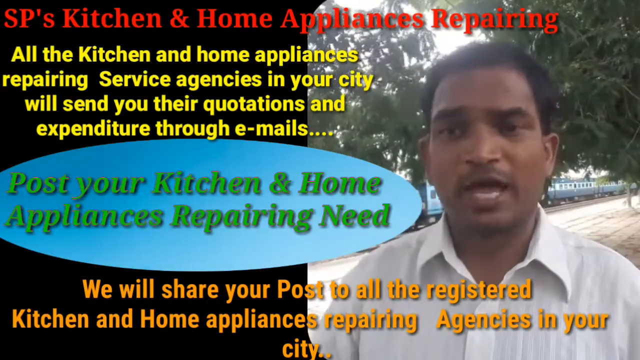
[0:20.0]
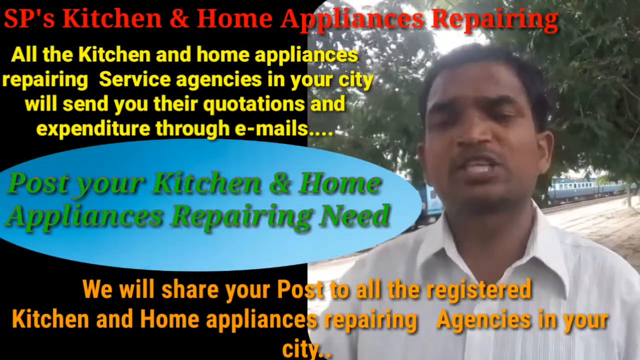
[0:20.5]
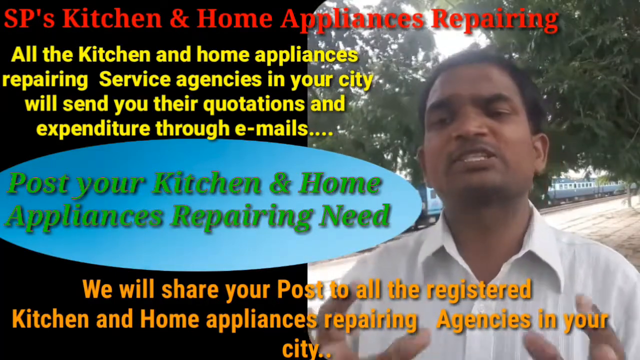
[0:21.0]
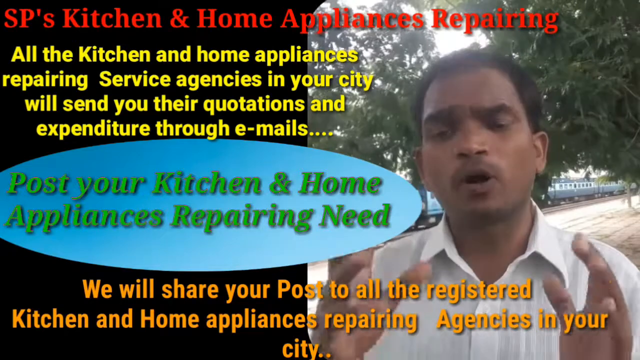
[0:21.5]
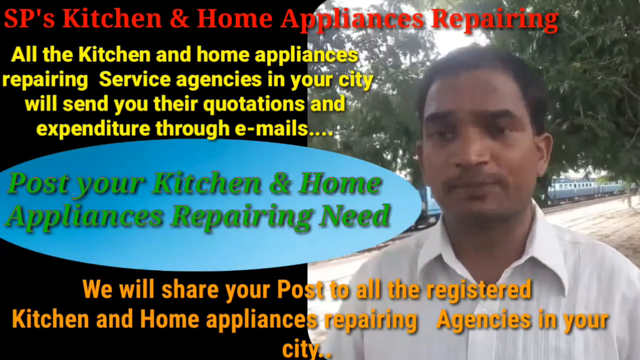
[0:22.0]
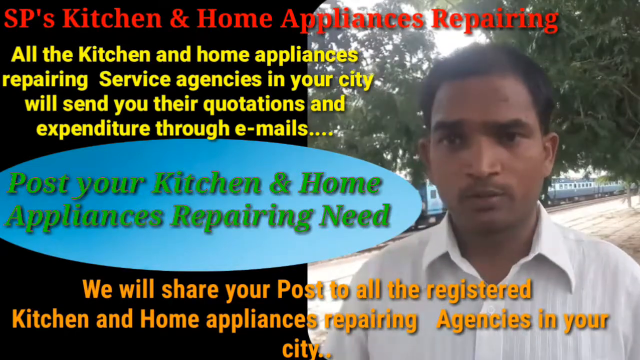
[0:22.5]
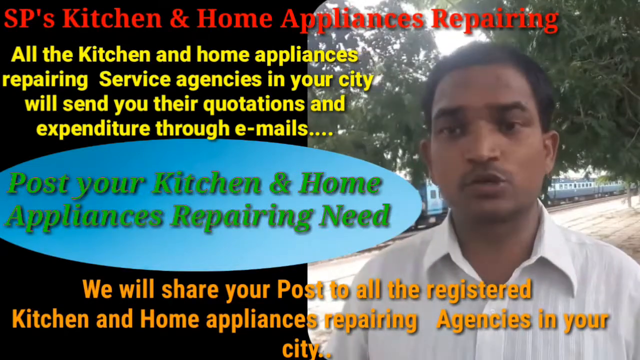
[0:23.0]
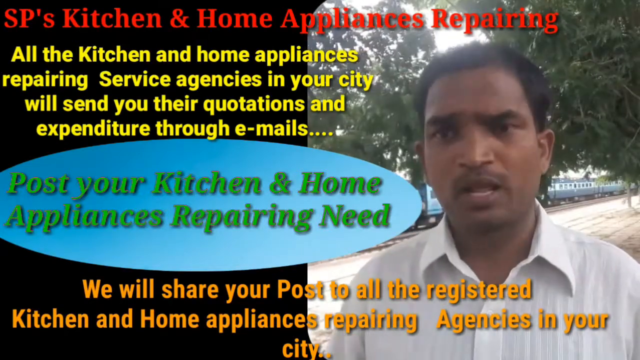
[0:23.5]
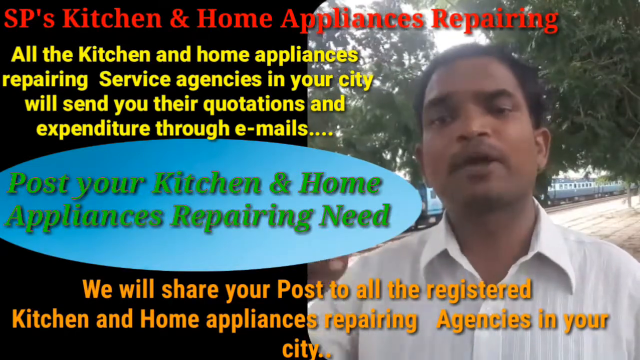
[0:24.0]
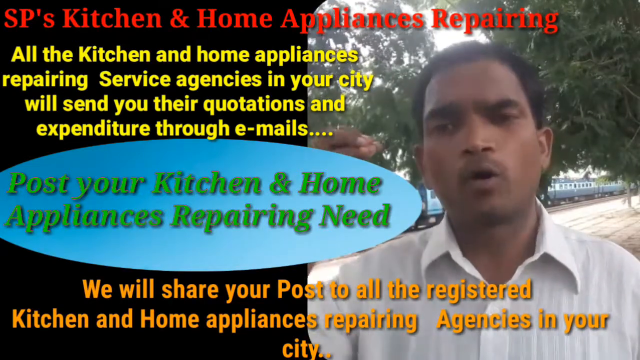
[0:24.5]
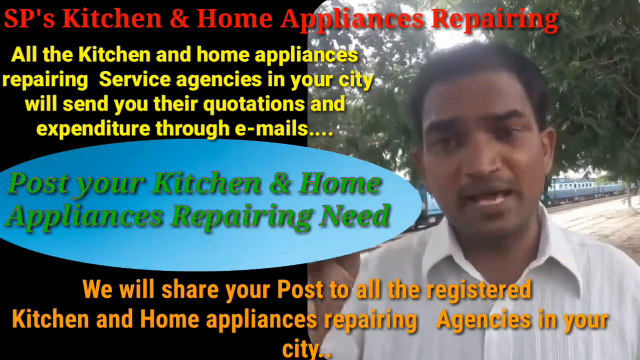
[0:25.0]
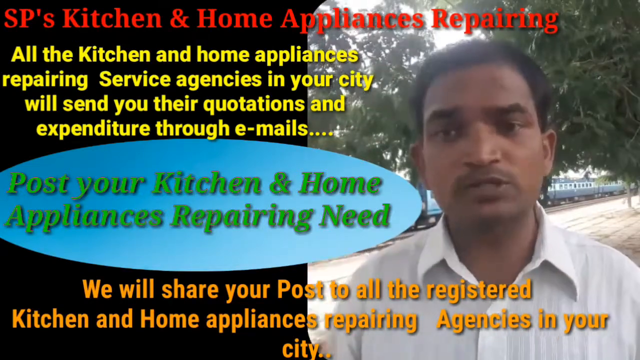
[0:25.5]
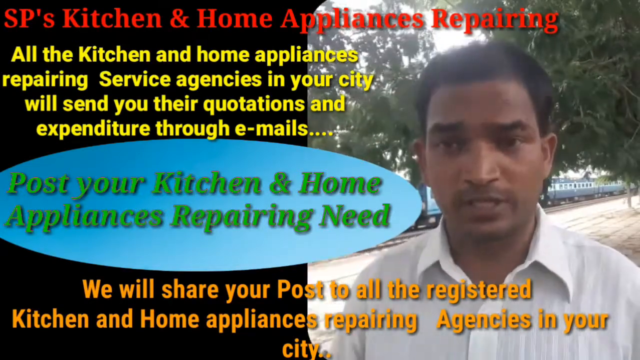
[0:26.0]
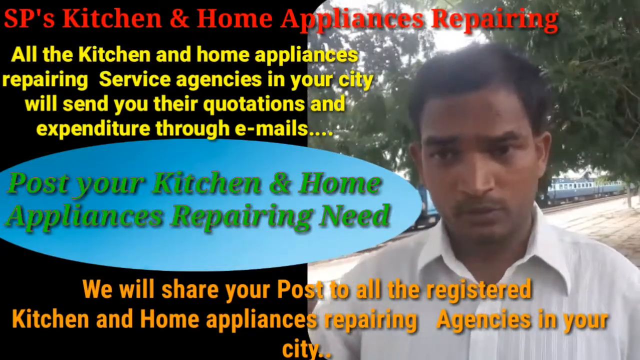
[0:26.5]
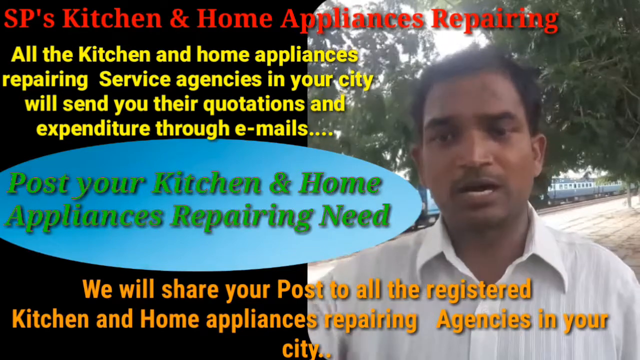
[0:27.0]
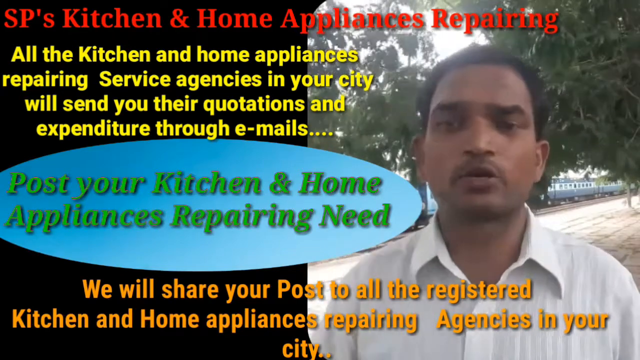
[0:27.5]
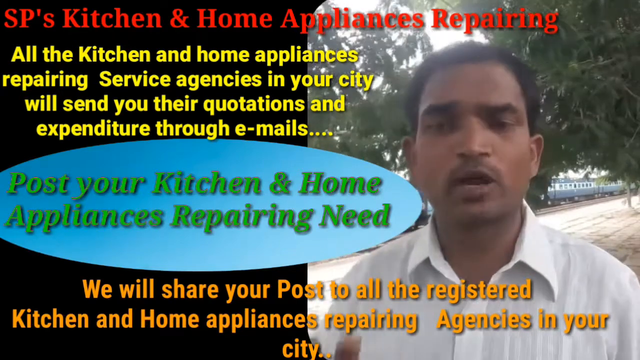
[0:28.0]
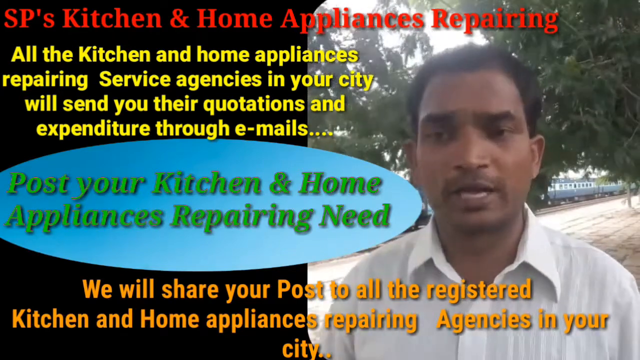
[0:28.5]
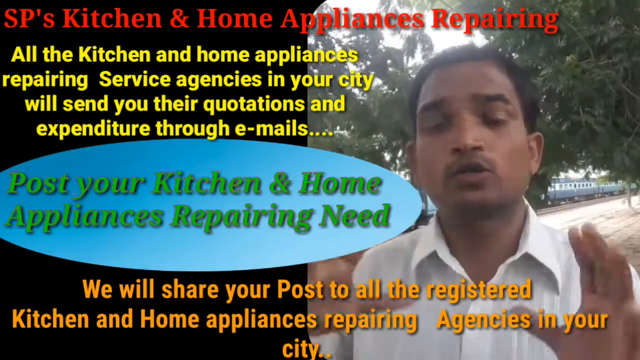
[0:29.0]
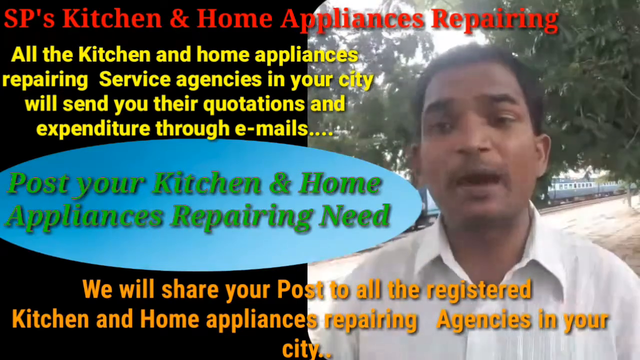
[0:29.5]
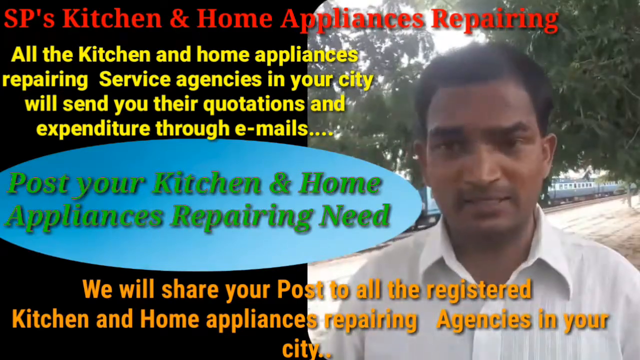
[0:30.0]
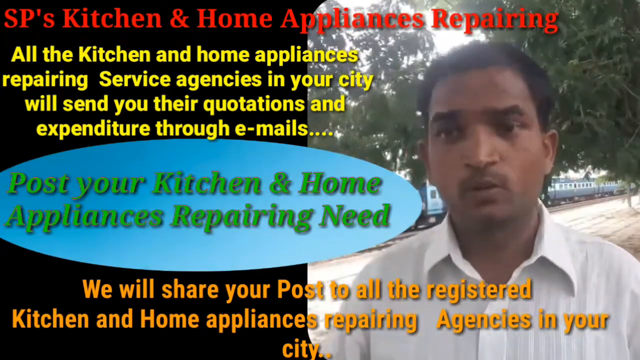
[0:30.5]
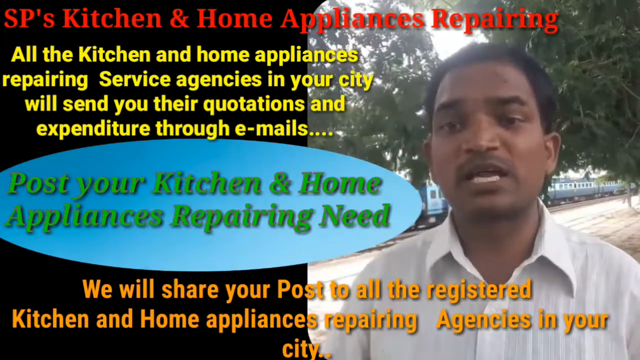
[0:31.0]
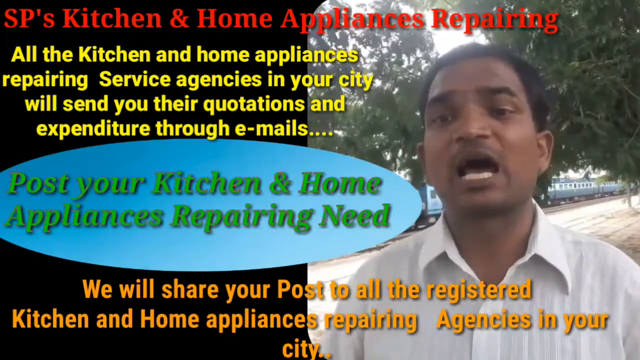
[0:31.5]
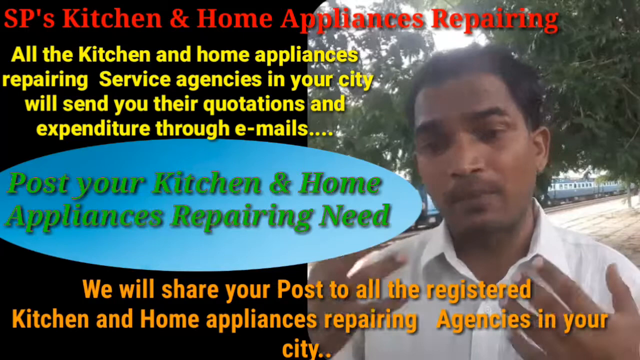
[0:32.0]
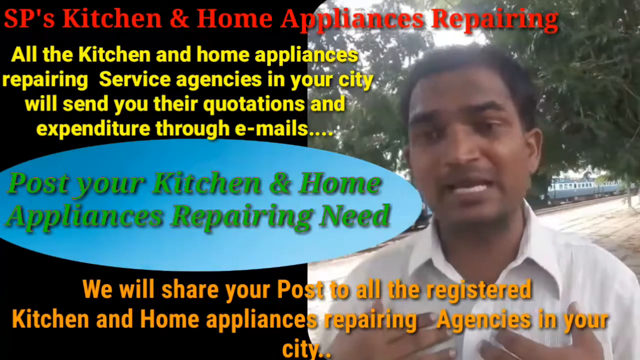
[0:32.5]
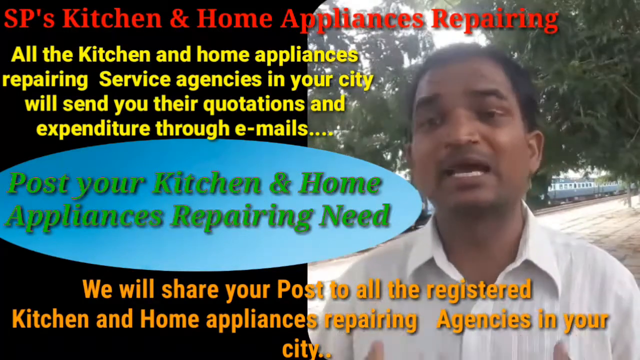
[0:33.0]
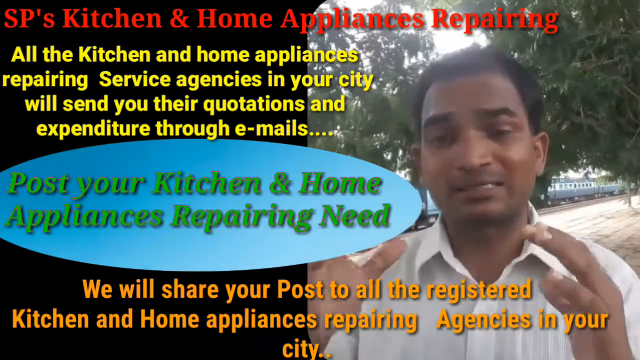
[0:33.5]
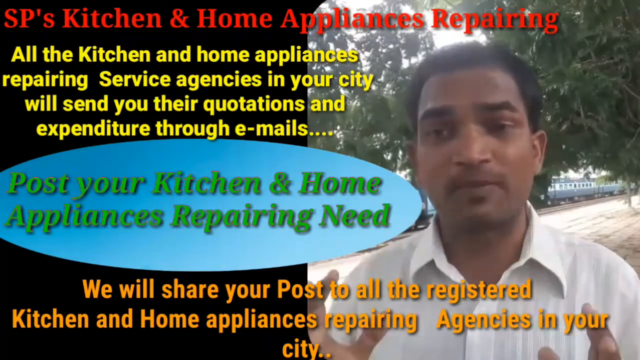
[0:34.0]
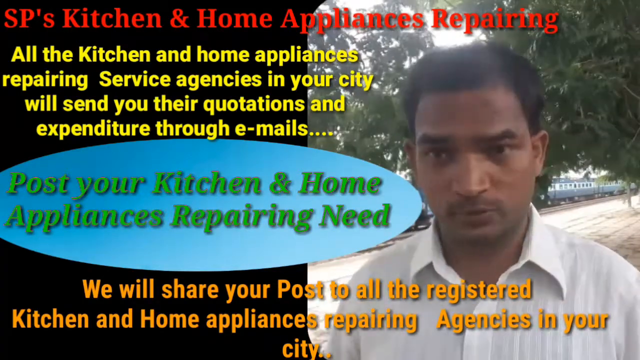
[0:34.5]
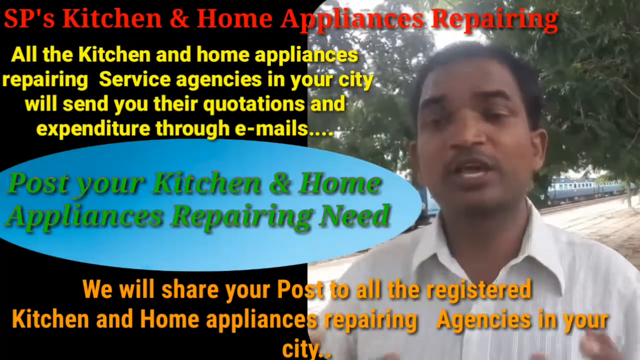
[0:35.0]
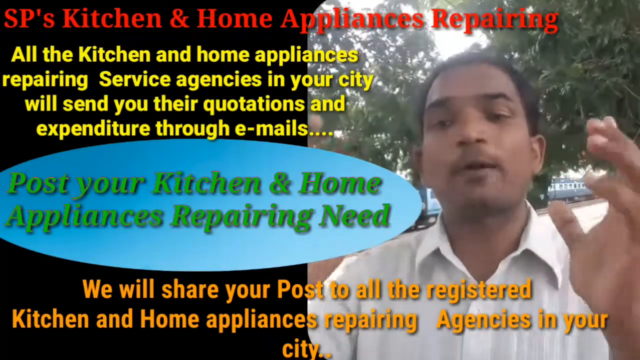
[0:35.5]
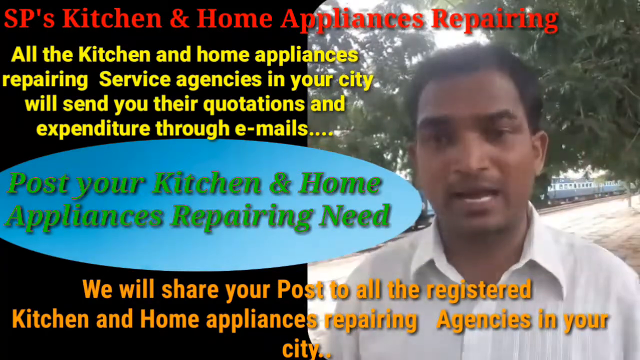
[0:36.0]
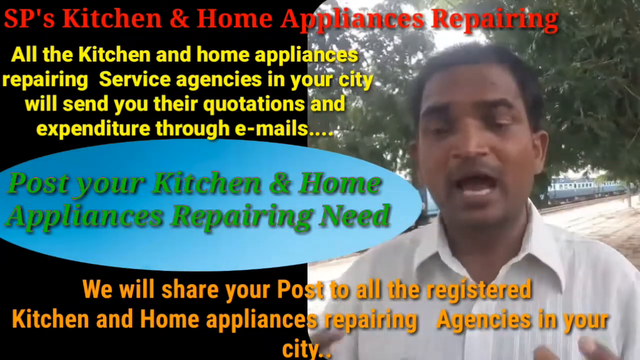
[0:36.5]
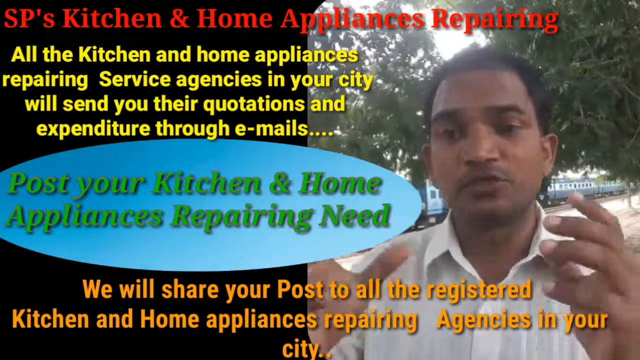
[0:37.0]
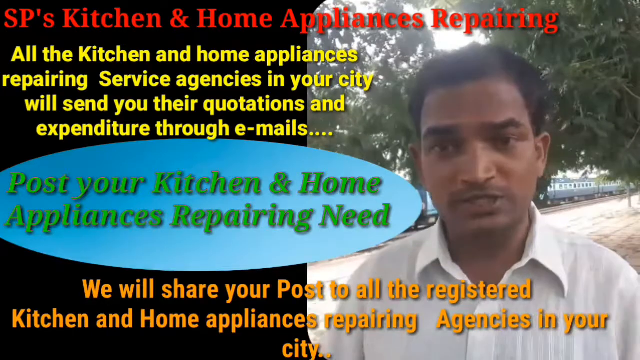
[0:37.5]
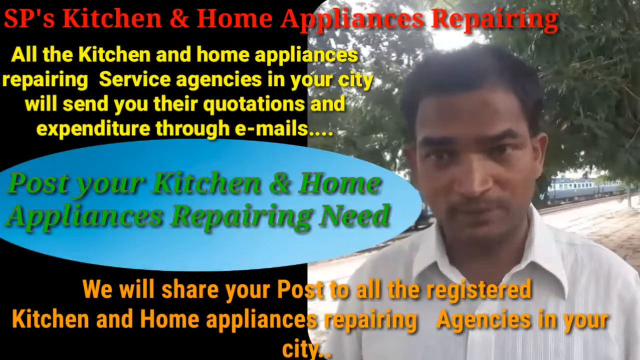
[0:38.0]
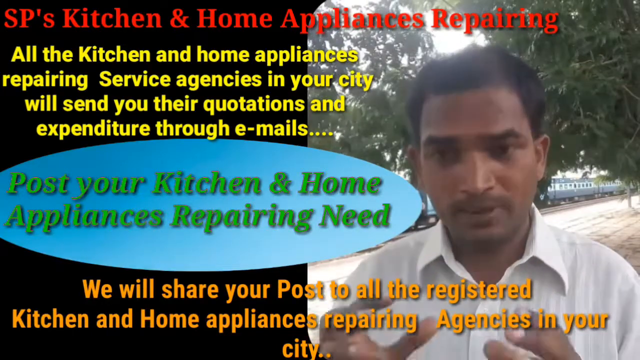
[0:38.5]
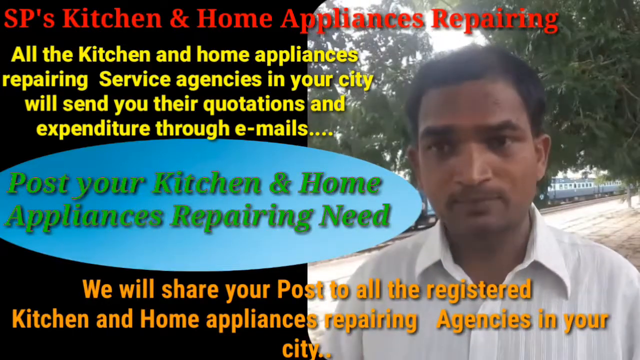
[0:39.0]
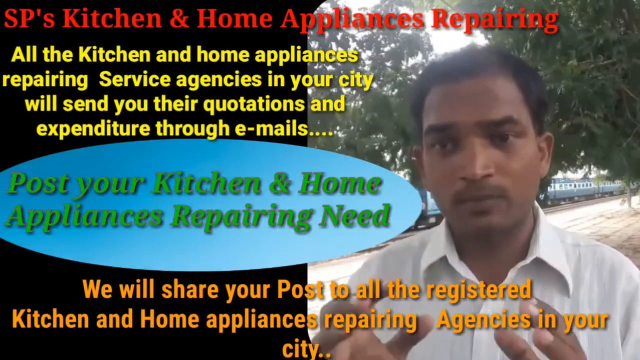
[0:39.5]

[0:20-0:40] A man seems to be outside, in front of some trees, talking directly to the camera. Red text reads "SP's kitchen and home appliance repair." Below it, yellow text reads "all the kitchen and home appliances repairing service agencies in your city will send you their quotations and expenditure through emails." What appears to be a blue oval with a blue background contains green text reading "post your kitchen and home appliances repairing need." At the bottom of the screen, orange text reads "we will share your post to all registered kitchen and home appliances repairing agencies in your area." The man continues talking to the camera, gesturing with his hands; it looks like it is recorded on some sort of phone or webcam.